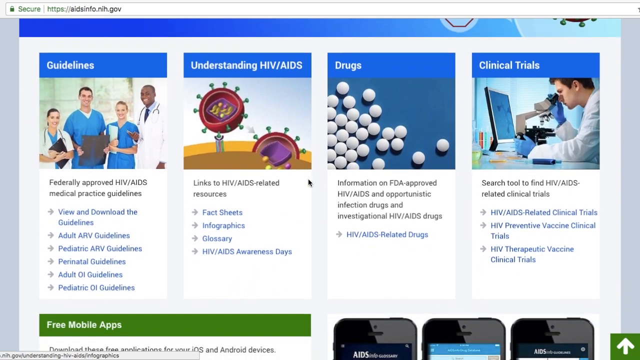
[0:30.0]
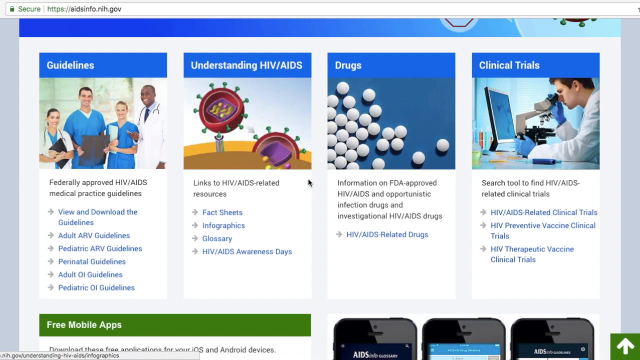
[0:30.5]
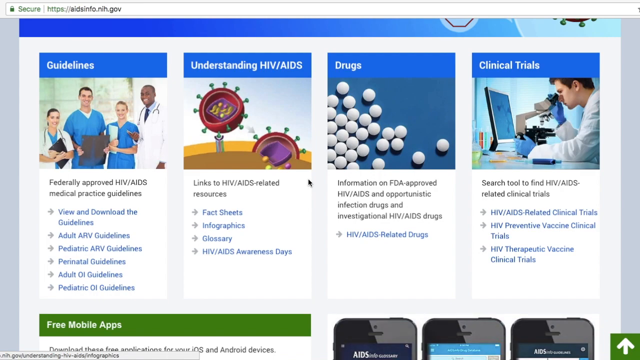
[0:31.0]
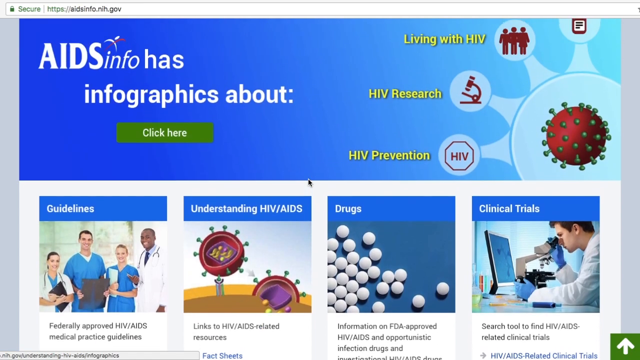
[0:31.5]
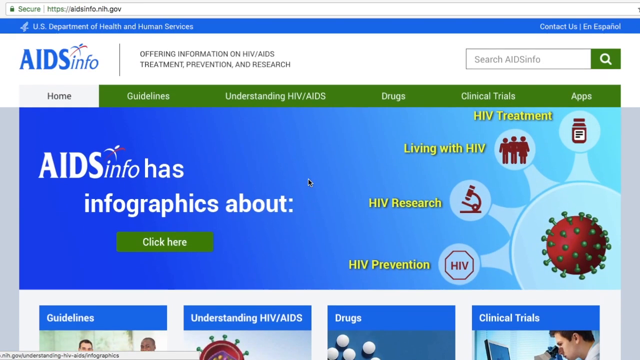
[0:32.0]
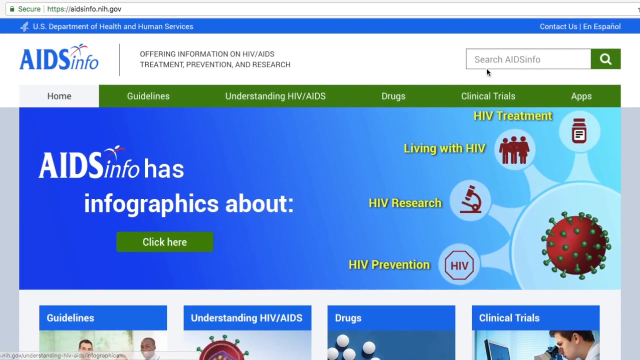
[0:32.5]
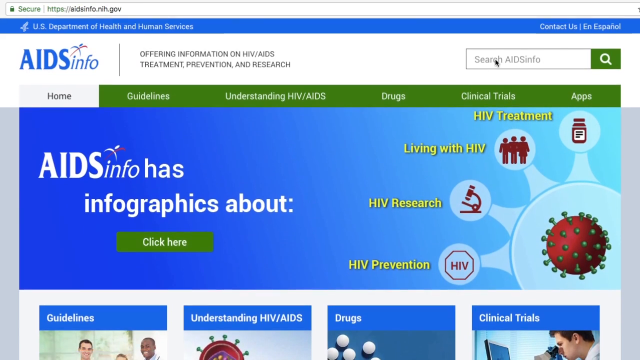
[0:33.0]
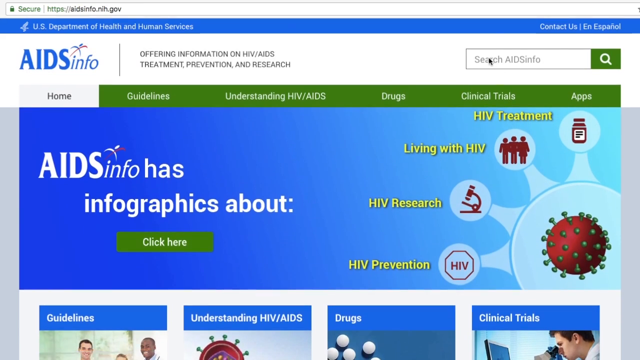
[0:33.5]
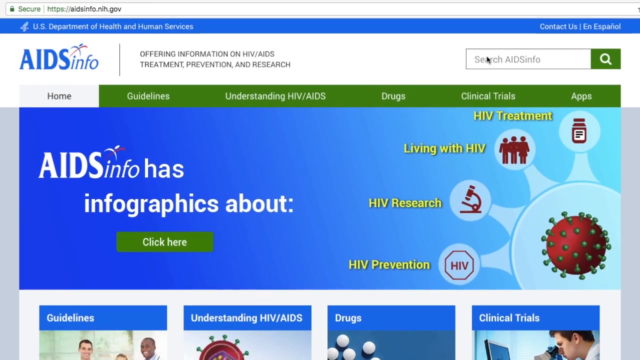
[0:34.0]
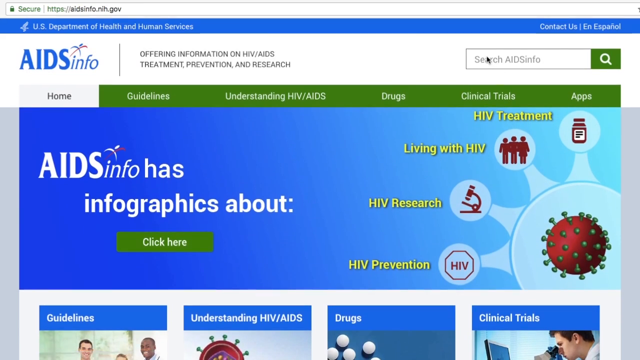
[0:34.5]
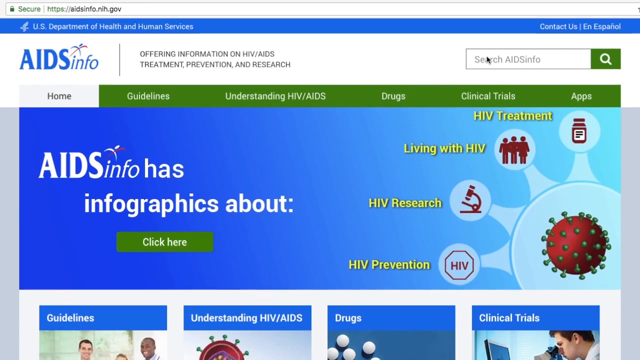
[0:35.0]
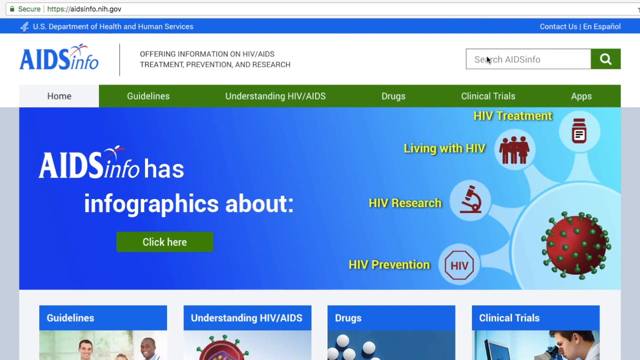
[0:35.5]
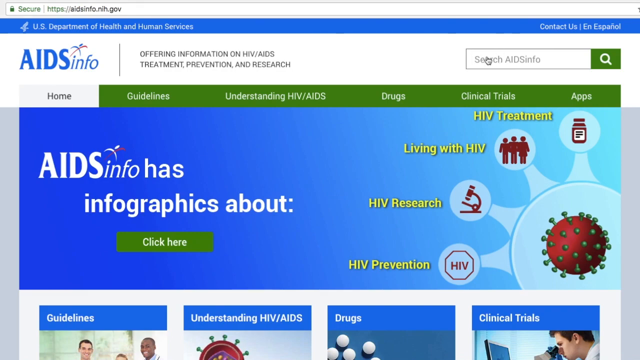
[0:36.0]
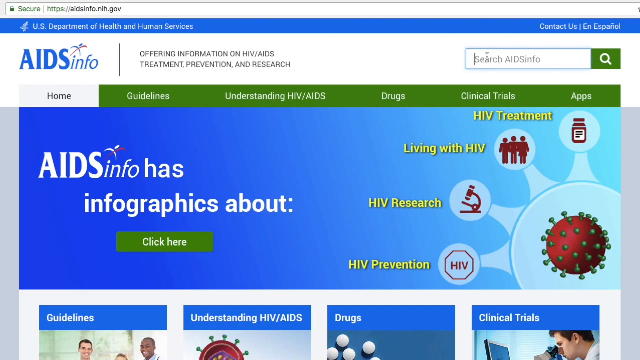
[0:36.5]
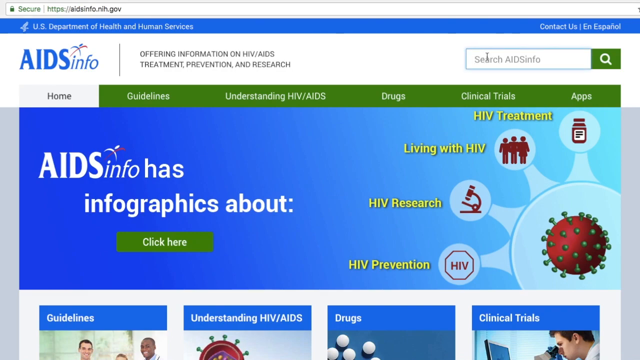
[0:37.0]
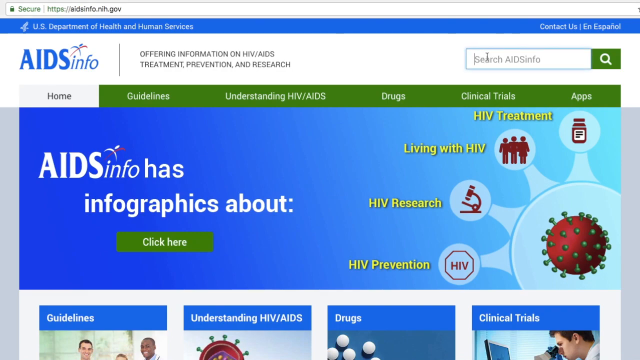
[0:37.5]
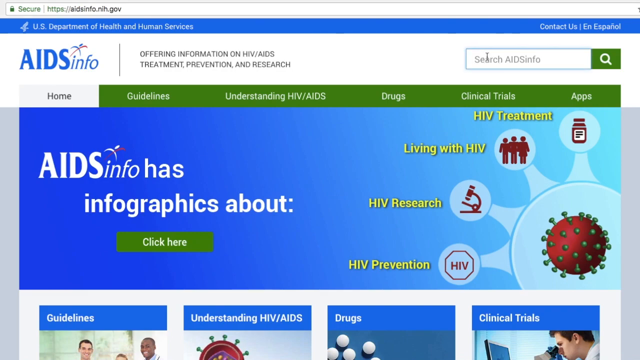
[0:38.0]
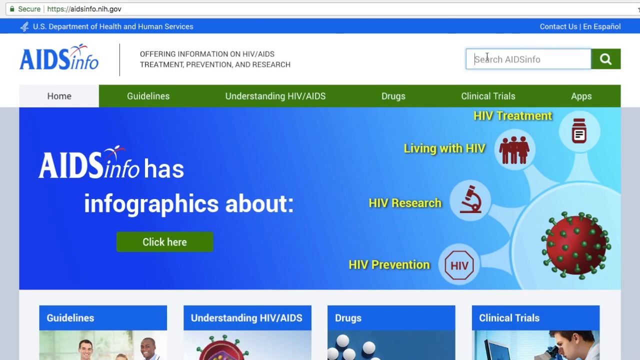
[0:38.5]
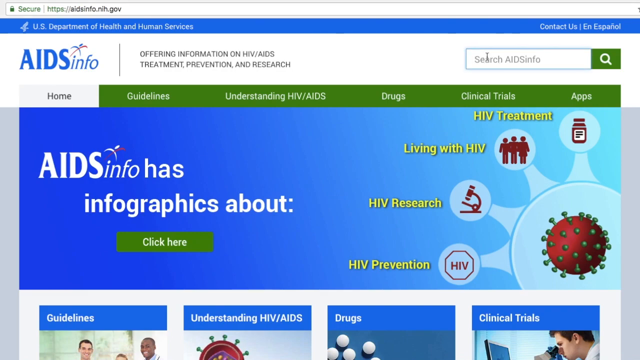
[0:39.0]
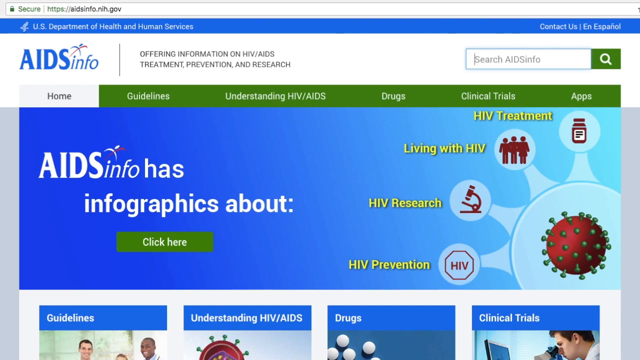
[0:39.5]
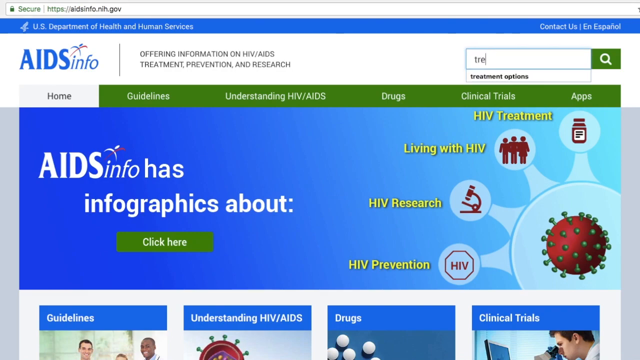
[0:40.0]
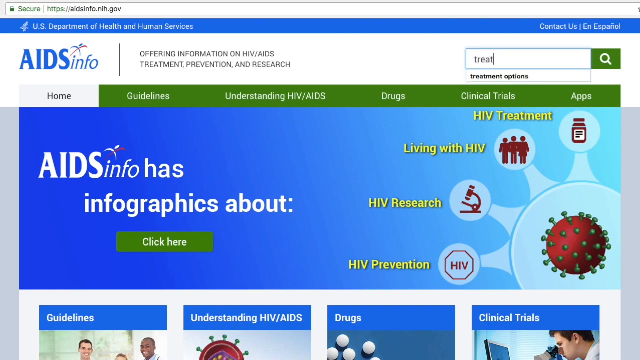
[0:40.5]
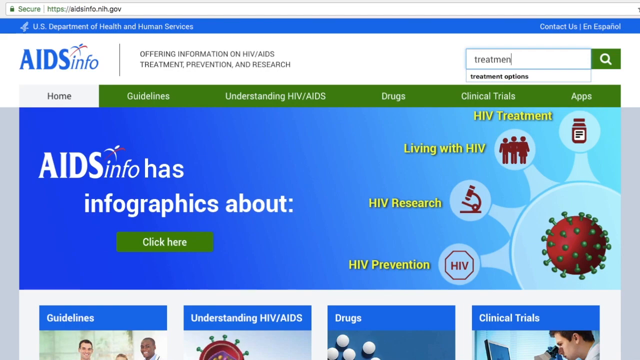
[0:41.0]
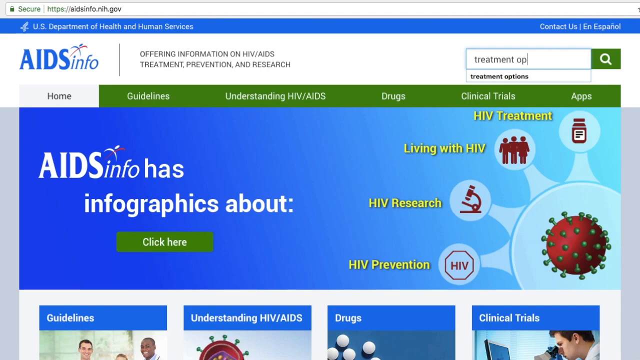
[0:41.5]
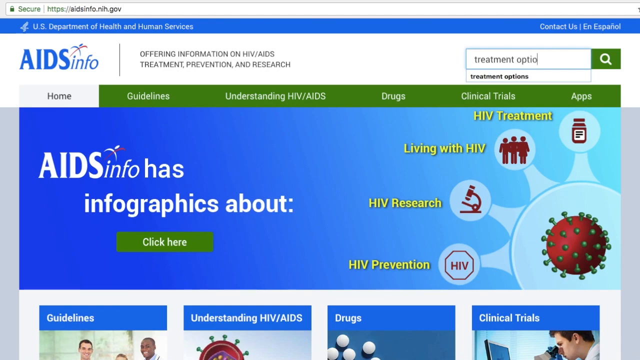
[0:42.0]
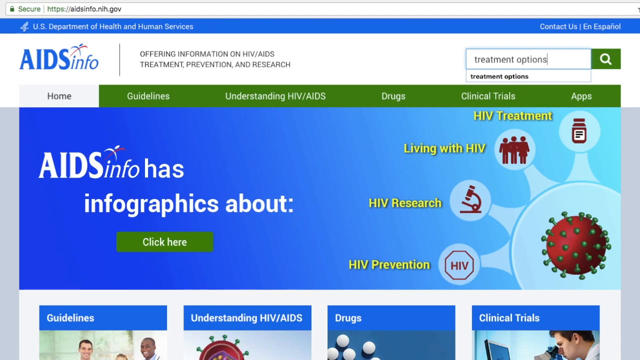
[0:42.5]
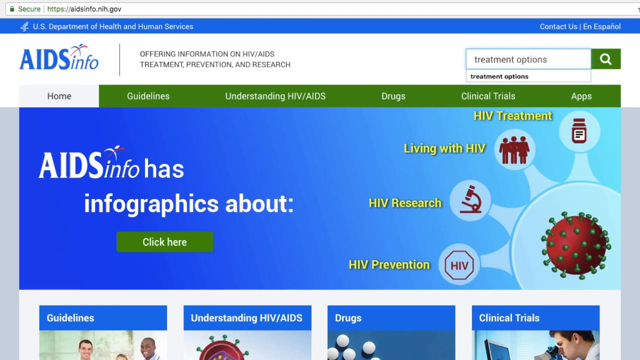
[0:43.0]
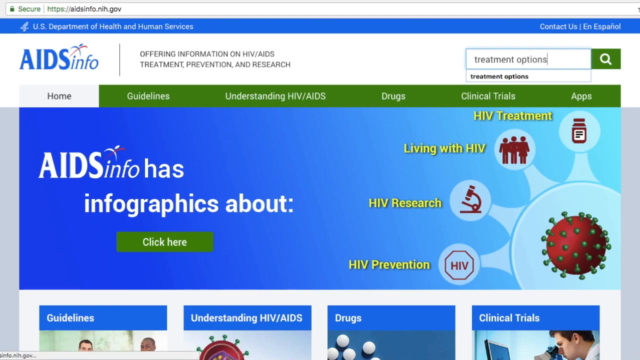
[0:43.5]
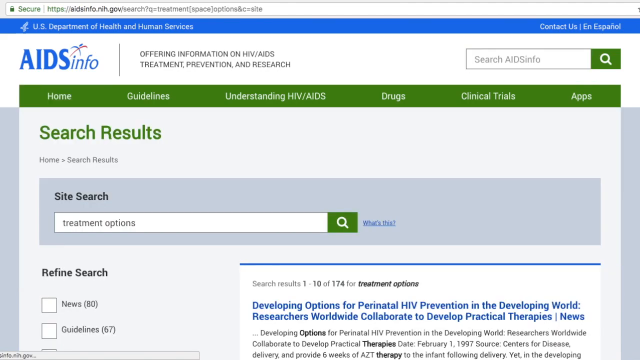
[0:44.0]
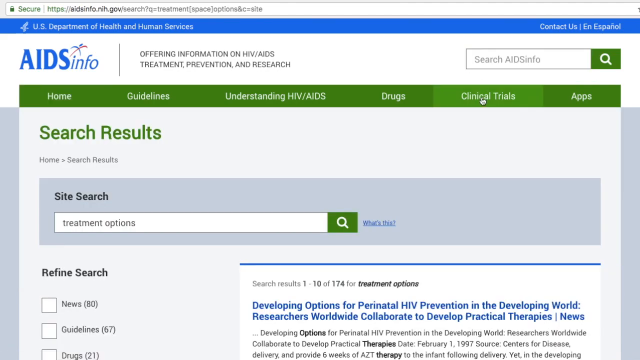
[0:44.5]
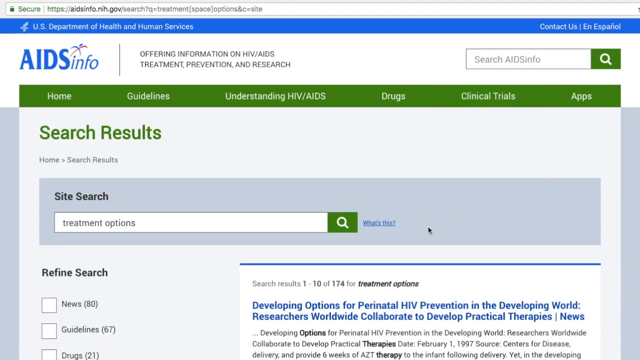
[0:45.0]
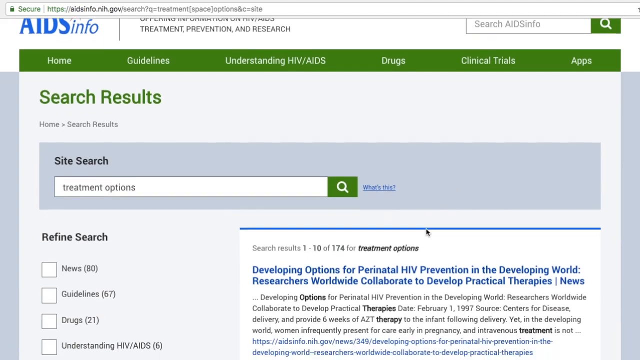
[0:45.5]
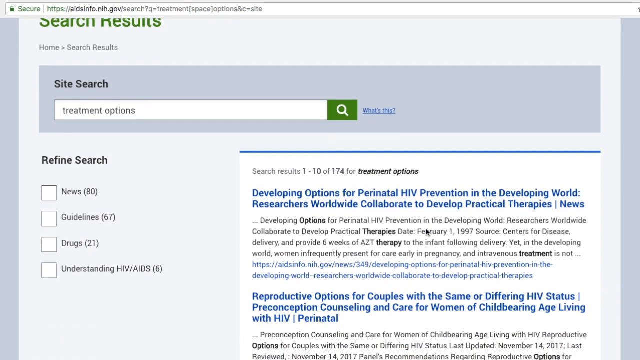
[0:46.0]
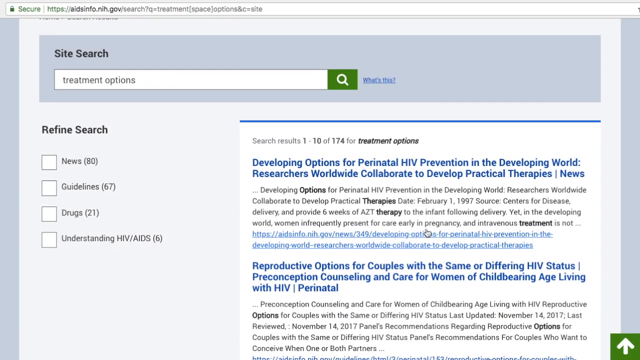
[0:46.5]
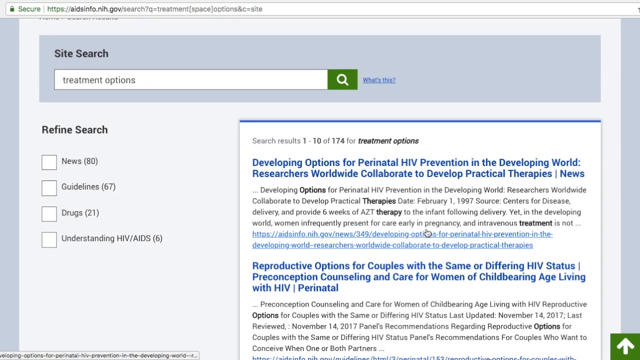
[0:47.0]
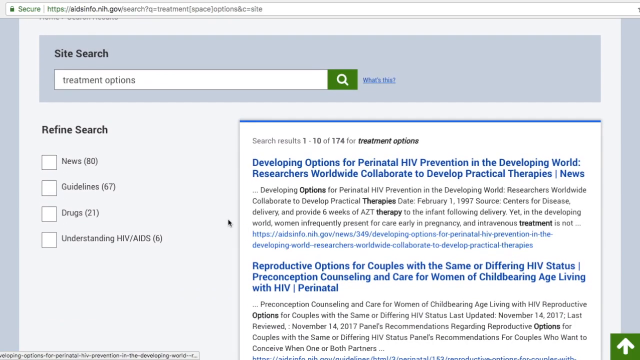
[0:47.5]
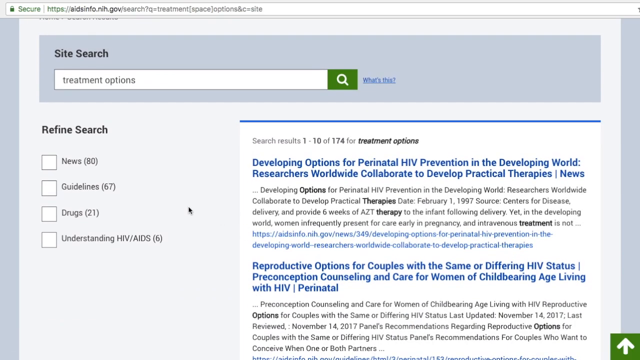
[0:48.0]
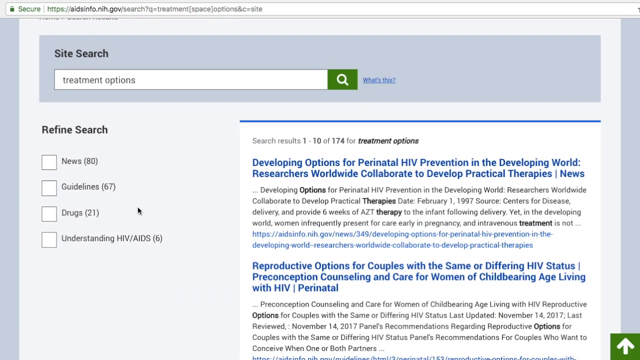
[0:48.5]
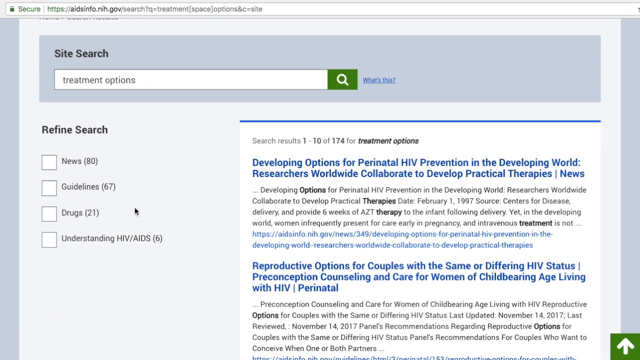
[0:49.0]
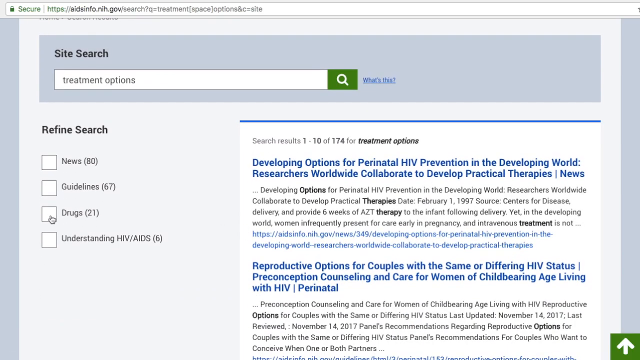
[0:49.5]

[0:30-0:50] The screen shows four vertical columns, each with a heading in white writing on a blue background. From left to right the headings are "guidelines," "understanding HIV-AIDS," "drugs," and "clinical trials." Under guidelines is an image of four people in medical outfits, two men and a woman, and below it the text "federally approved HIV-AIDS medical practice guidelines," followed by "adult ARV guidelines," "pediatric ARV guidelines," "perinatal guidelines," "adult O1 guidelines," and "pediatric O1 guidelines." Under the understanding HIV tab is a drawing of two cells and the text "links to HIV-AIDS-related resources, fact sheets, infographics, glossary, HIV-AIDS awareness days." Under the drugs tab is an image of round white tablets and the text "information on FDA-approved HIV-AIDS and opportunistic infection drugs, and investigational HIV-AIDS drugs." Under the clinical trials tab is an image of a man sitting in front of a computer screen, wearing a white lab coat and looking through a microscope; underneath it says "HIV-AIDS-related clinical trials, HIV prevention vaccine clinical trials, HIV therapeutic vaccine clinical trials." The search bar at the top then comes into view, and someone types "treatment options" into it.